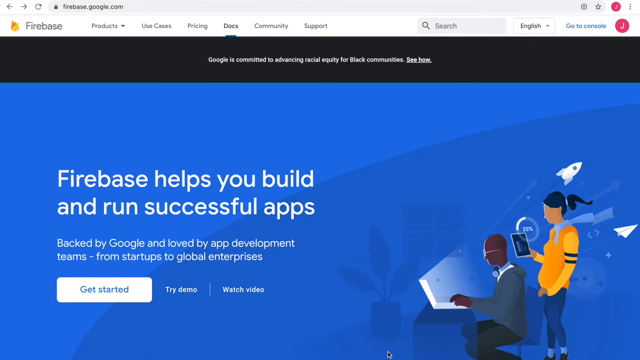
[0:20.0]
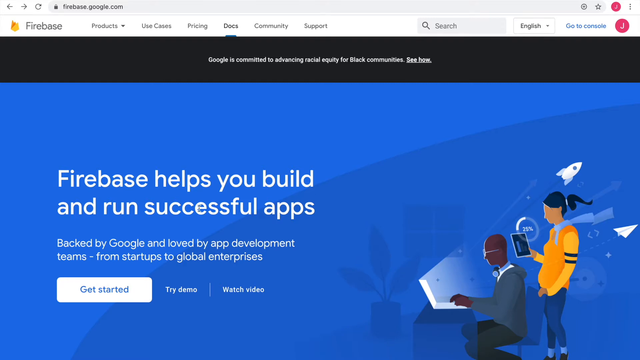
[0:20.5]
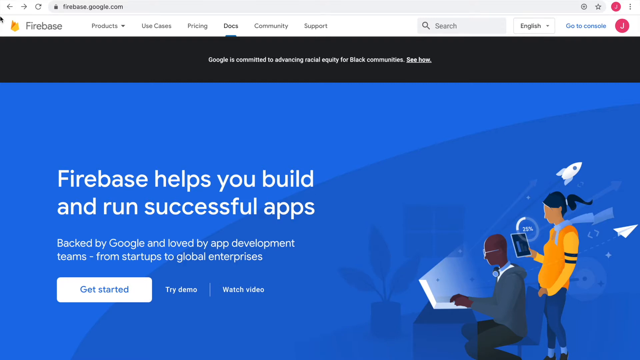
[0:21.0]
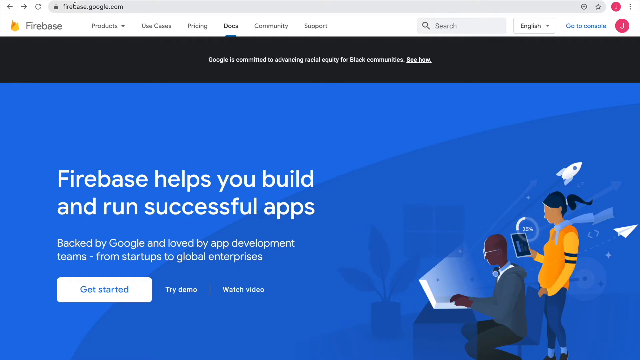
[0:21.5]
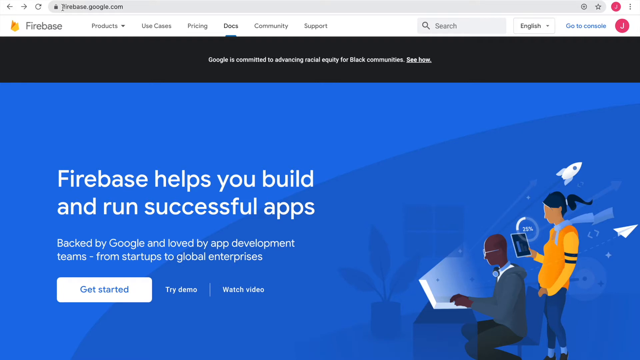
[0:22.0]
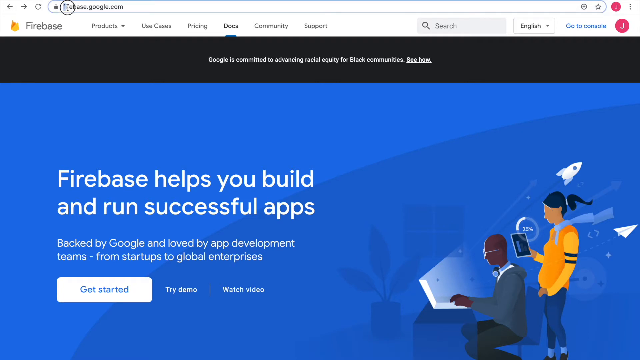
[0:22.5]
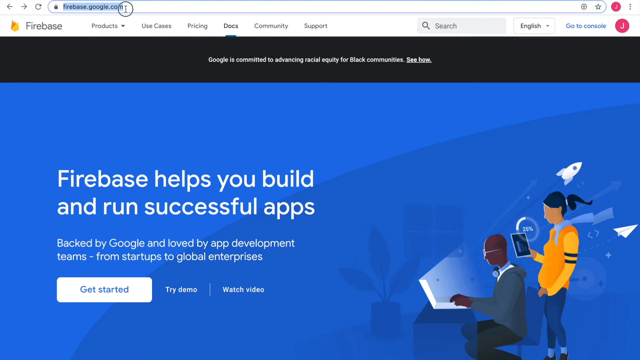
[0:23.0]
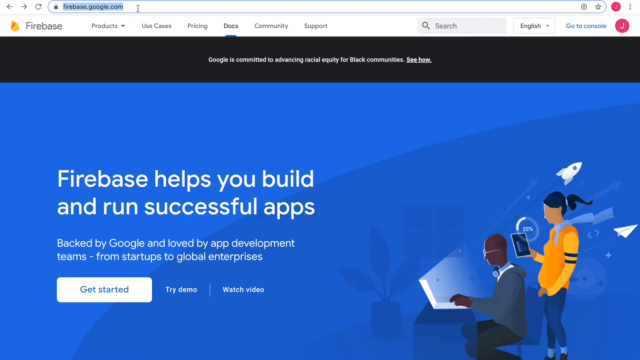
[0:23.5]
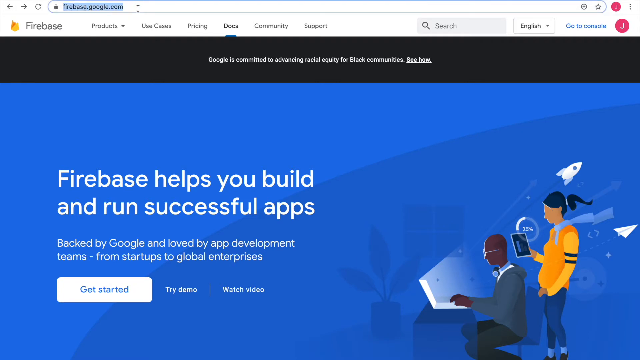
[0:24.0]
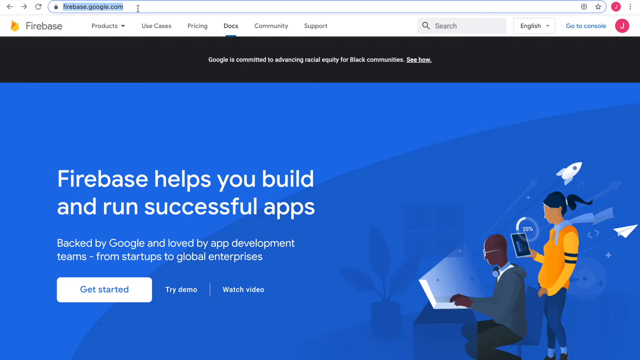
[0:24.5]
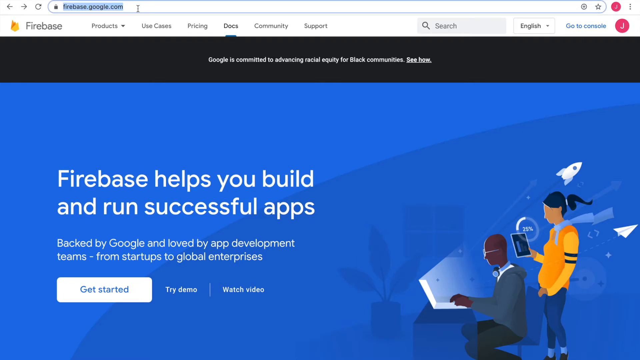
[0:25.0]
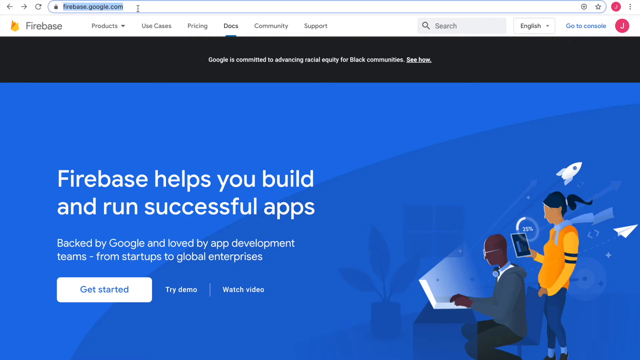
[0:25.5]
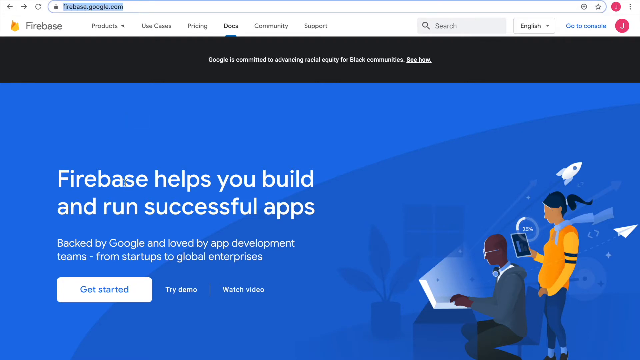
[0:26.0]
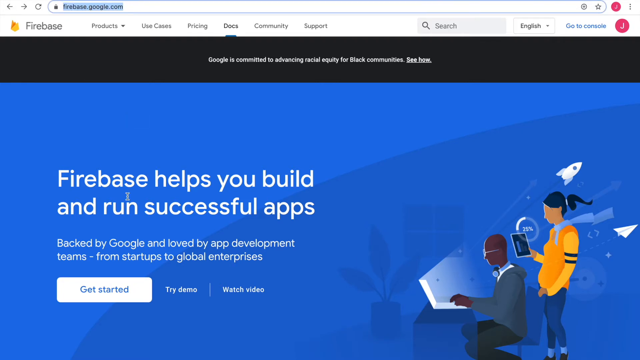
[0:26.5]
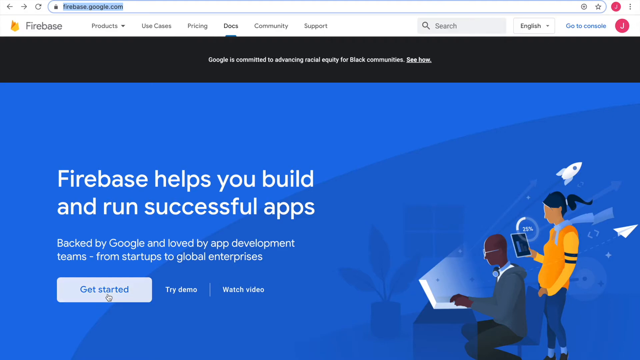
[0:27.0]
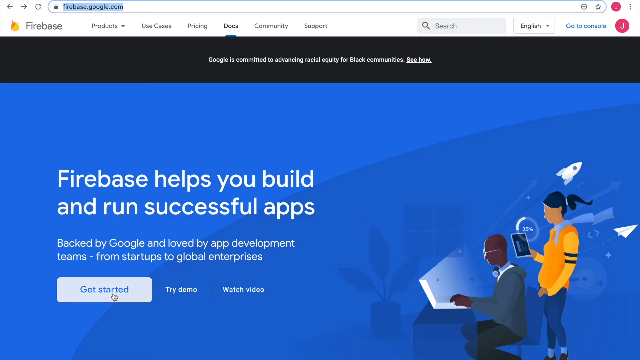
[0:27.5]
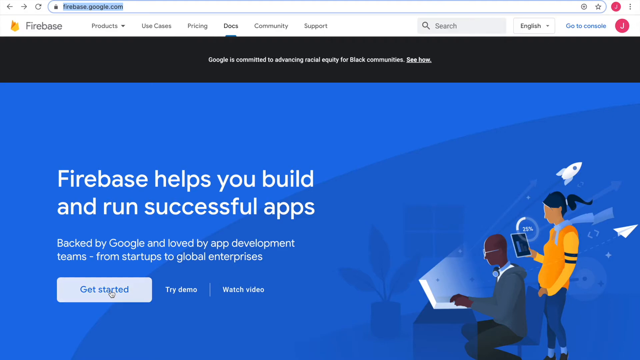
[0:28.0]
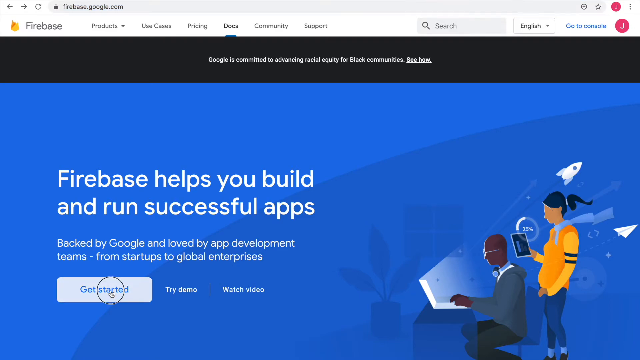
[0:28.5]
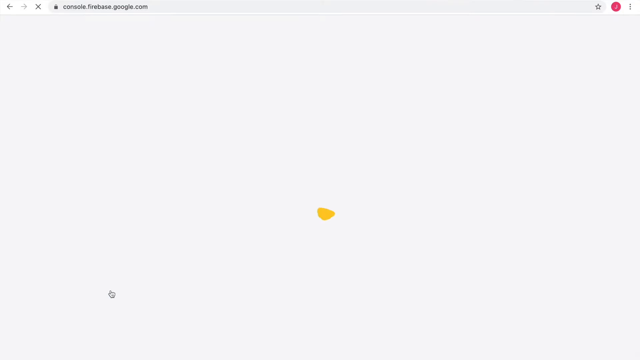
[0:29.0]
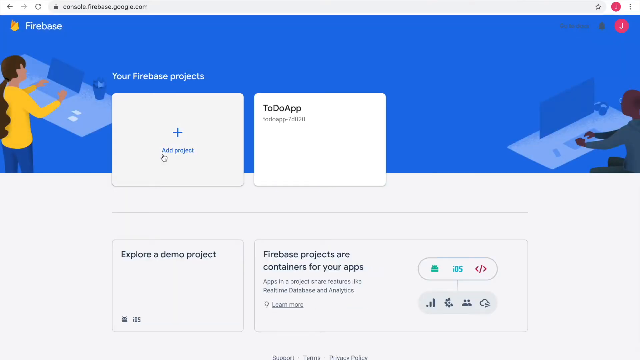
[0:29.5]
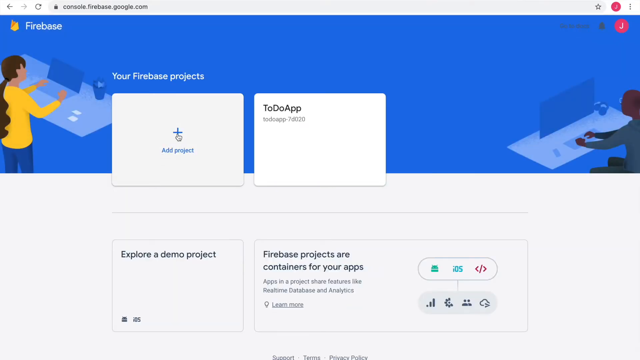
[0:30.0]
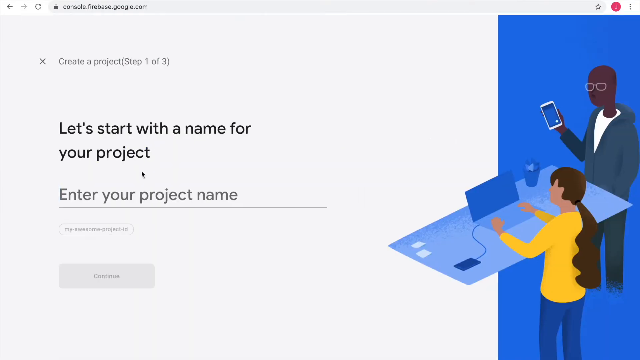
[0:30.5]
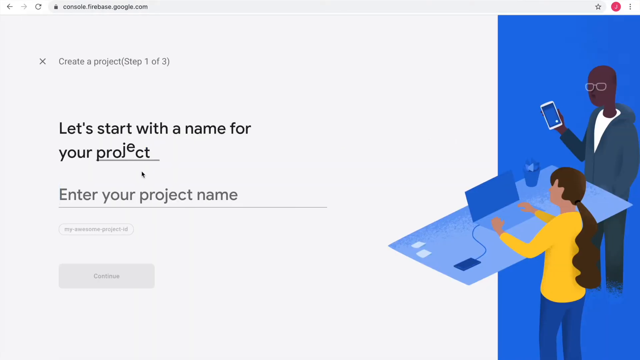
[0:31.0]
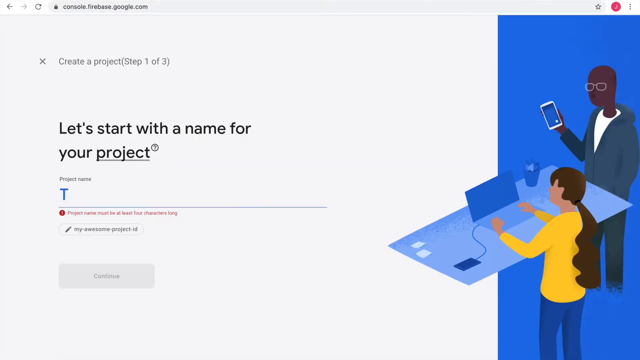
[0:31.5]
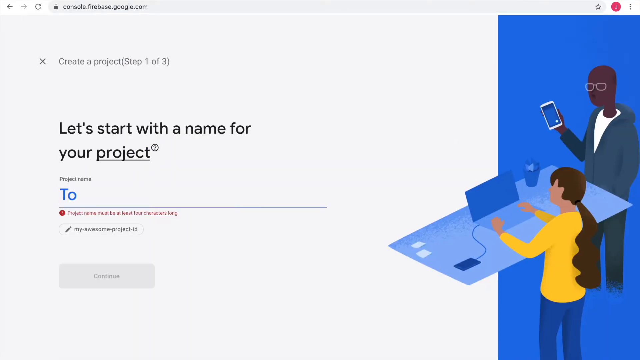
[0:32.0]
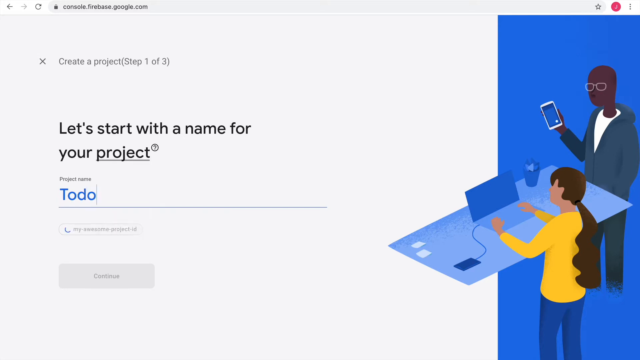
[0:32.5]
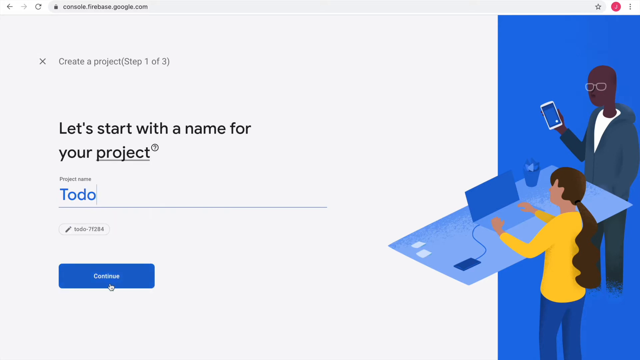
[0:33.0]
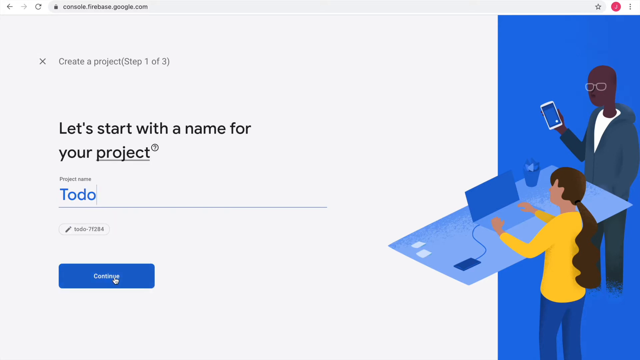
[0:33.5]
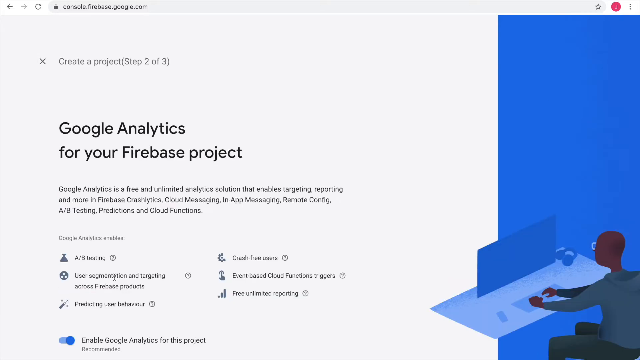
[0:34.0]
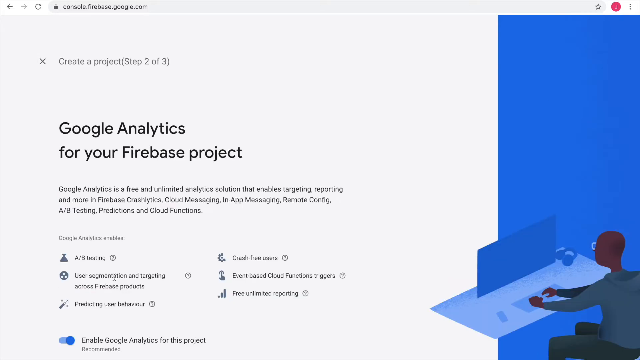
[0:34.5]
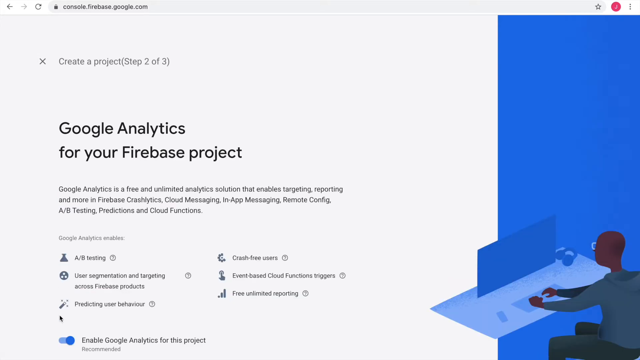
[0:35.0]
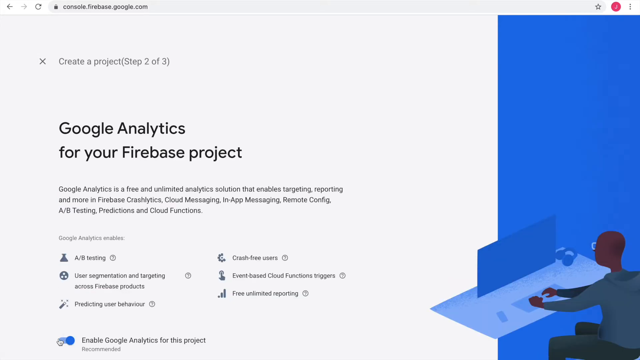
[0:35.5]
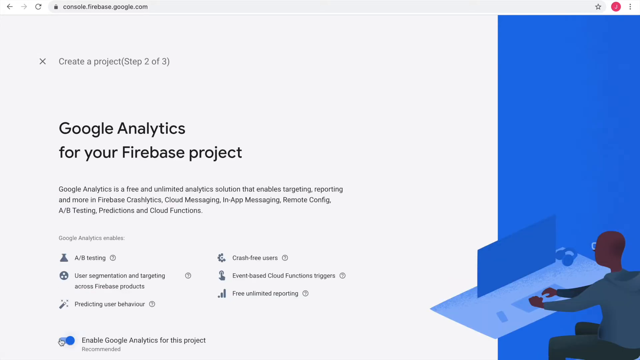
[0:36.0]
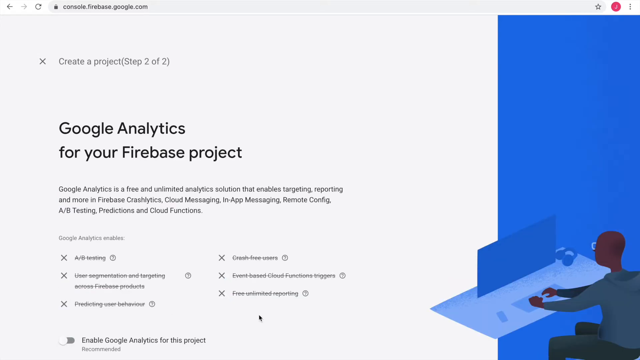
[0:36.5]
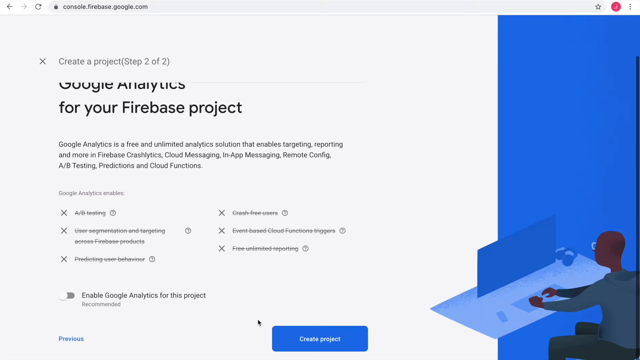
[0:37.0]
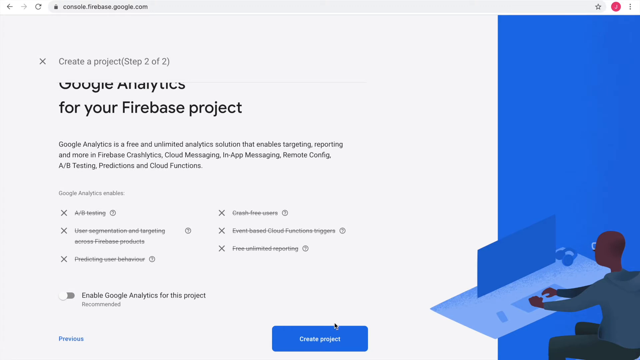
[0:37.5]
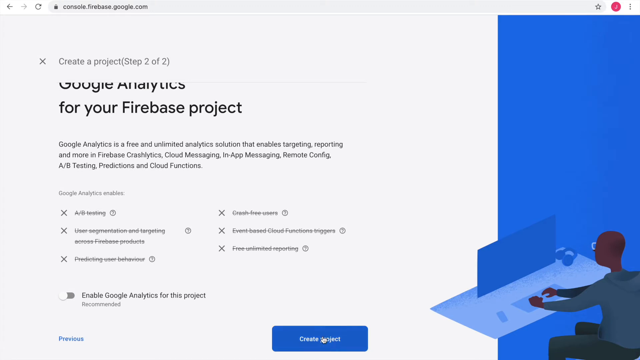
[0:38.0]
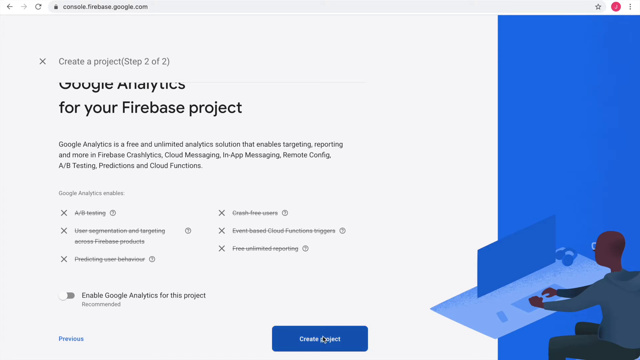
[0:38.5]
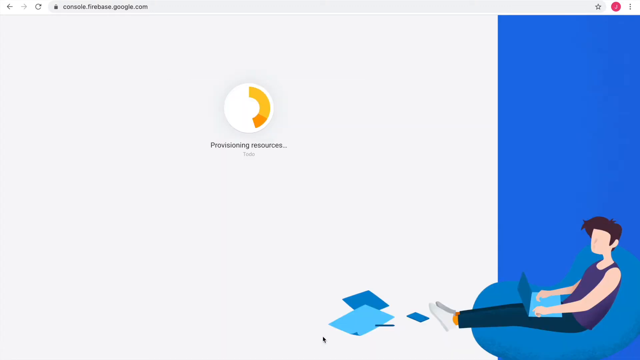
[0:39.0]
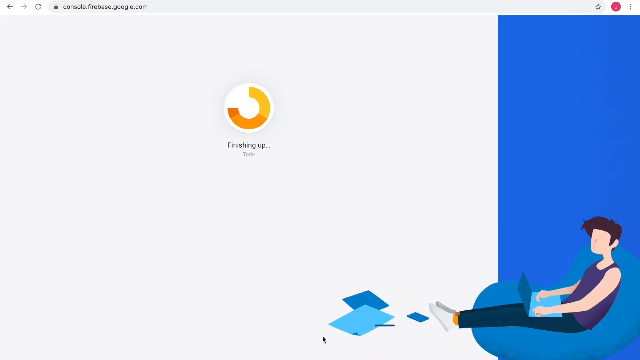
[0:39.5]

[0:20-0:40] The Firebase home page is still shown, with the options to get started or to try a demo. At the top are links to community and support, and there is a search bar in the top corner of the page. The text at the top of the website is highlighted, and then the page moves to where a name for a project can be entered; the project is named to-do list. An image on creating a to-do list appears, and the page shows an initialization bar that circles around in gold, wrapping around as the to-do list starts up under the project list.